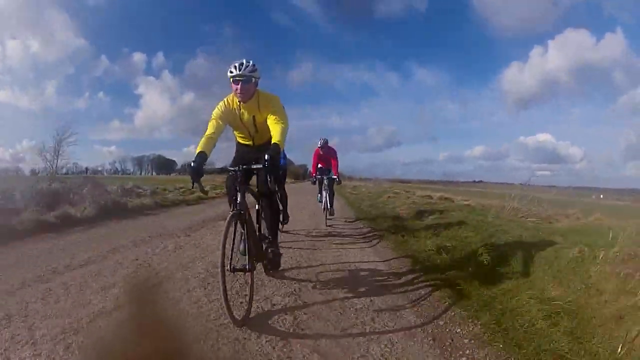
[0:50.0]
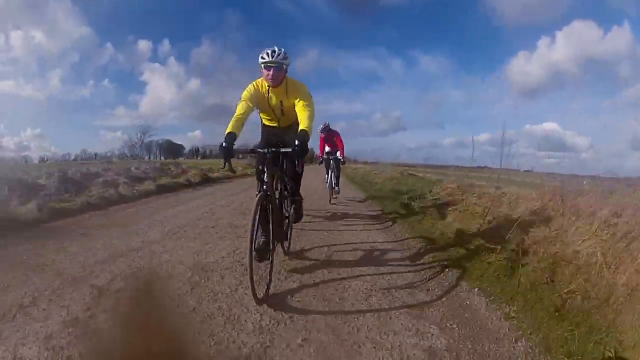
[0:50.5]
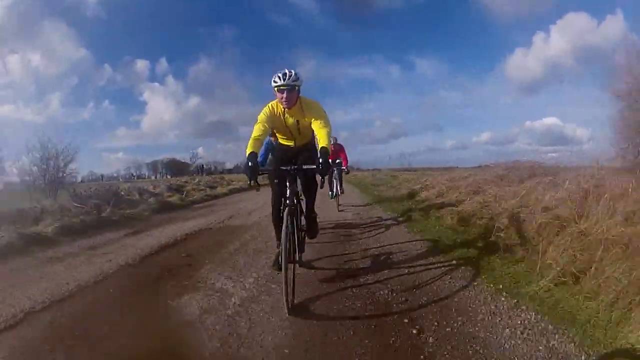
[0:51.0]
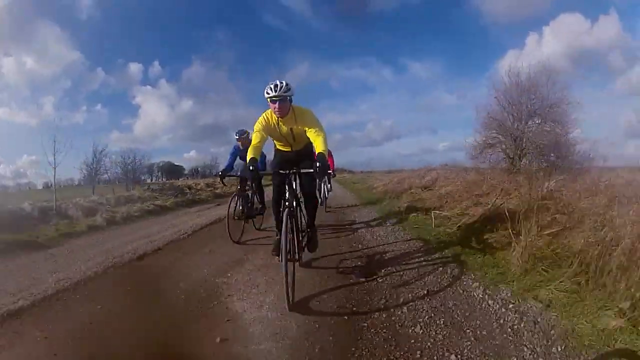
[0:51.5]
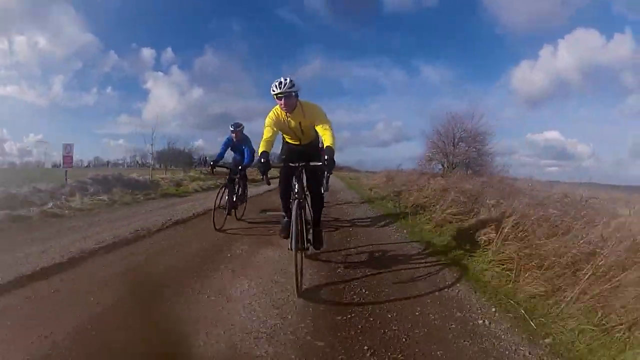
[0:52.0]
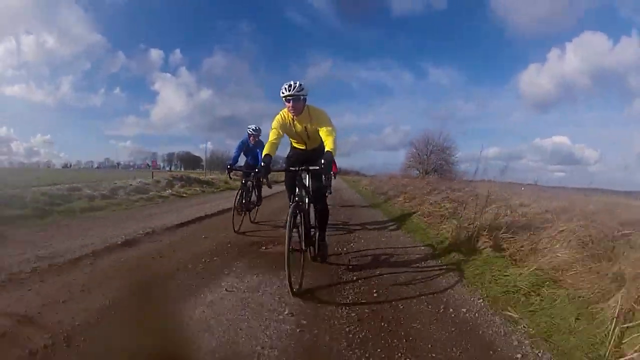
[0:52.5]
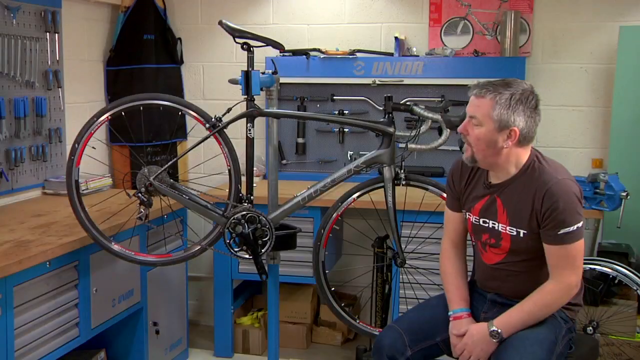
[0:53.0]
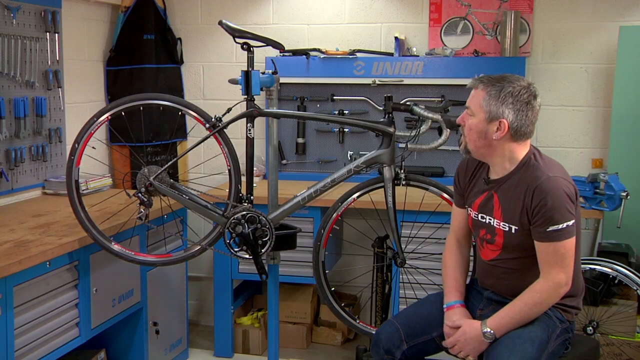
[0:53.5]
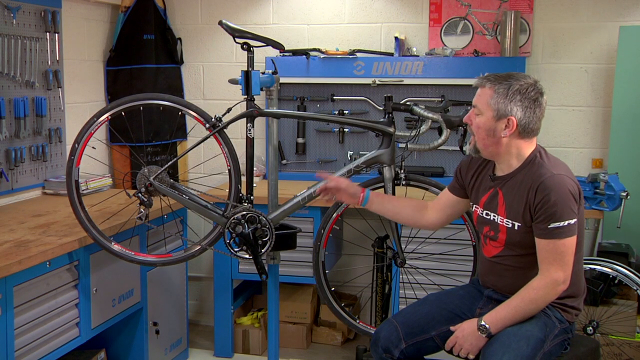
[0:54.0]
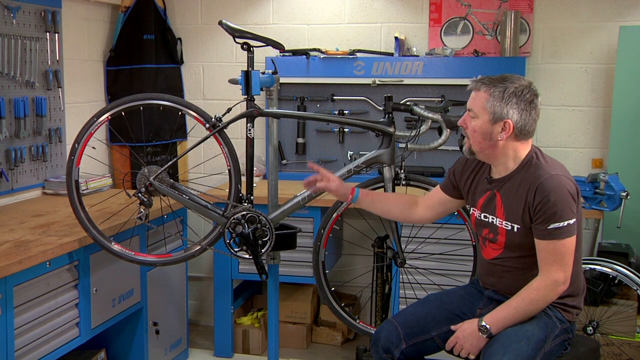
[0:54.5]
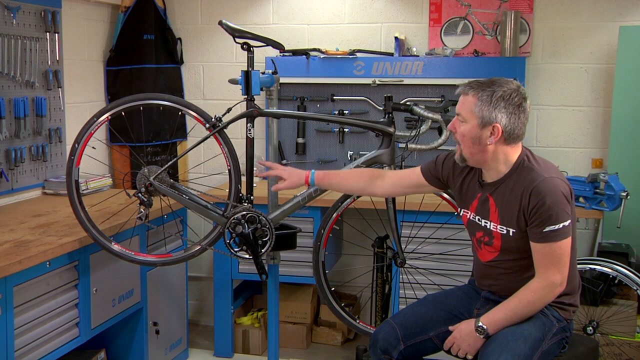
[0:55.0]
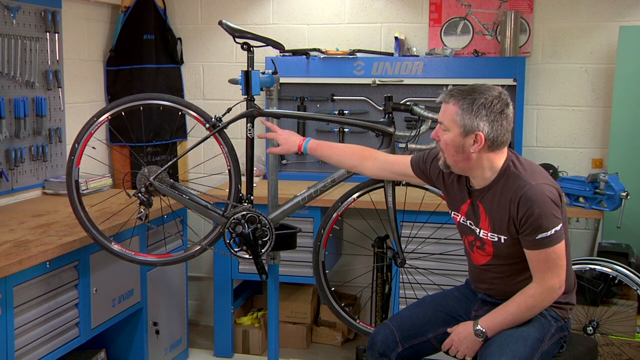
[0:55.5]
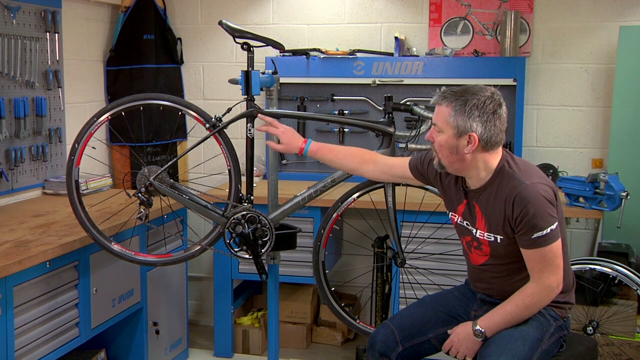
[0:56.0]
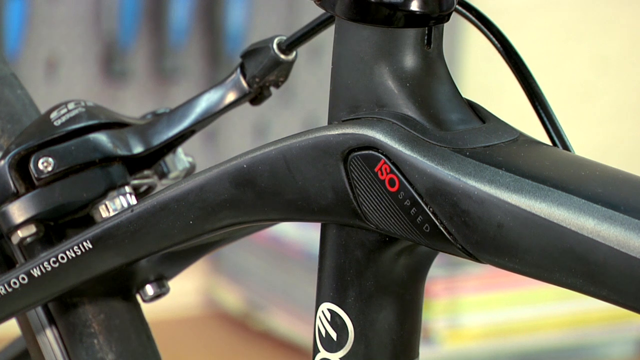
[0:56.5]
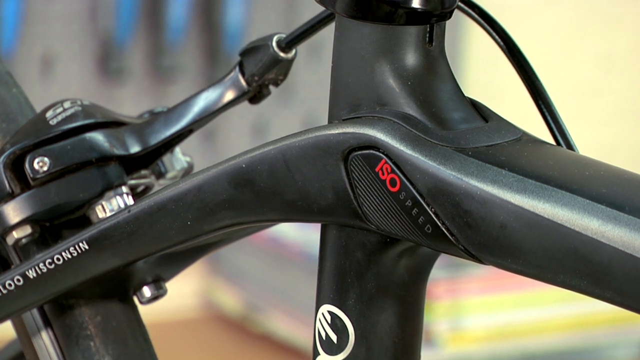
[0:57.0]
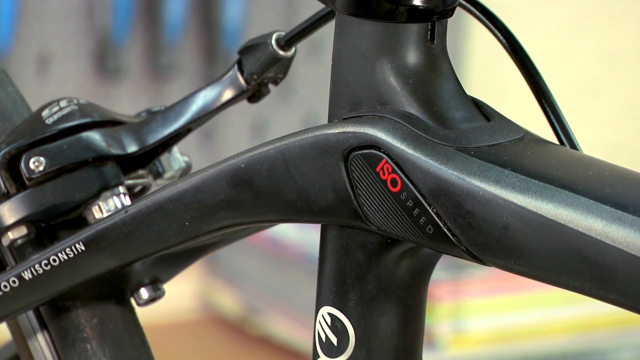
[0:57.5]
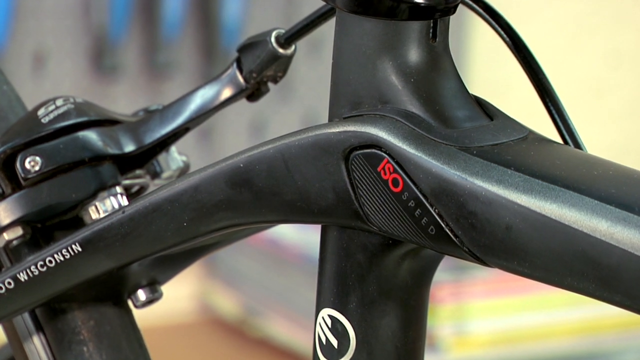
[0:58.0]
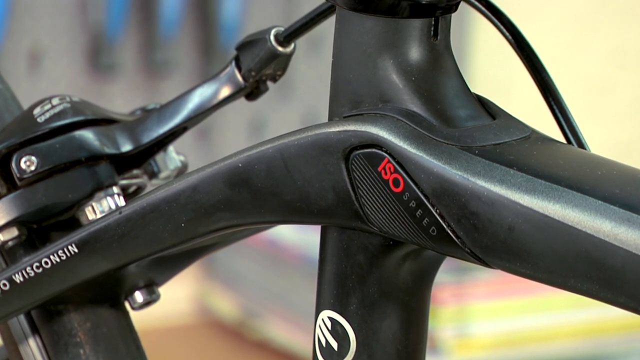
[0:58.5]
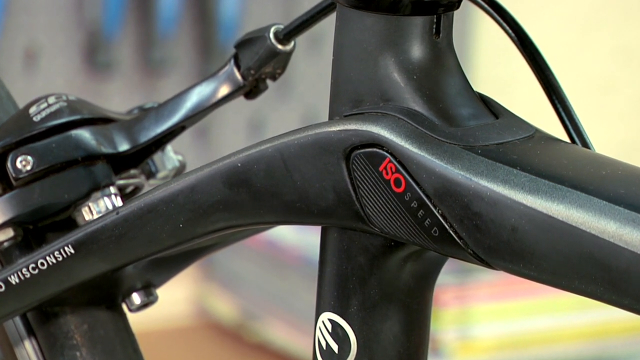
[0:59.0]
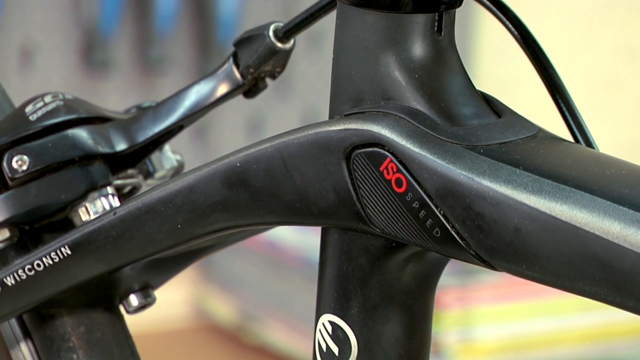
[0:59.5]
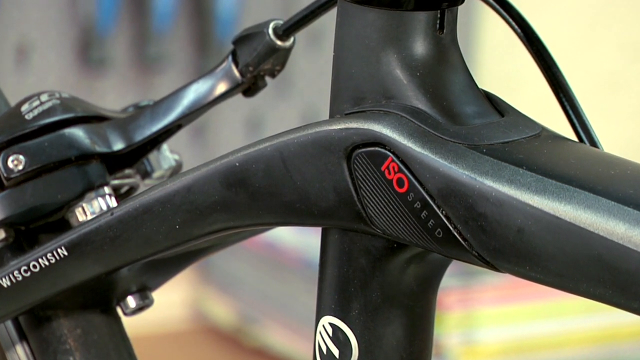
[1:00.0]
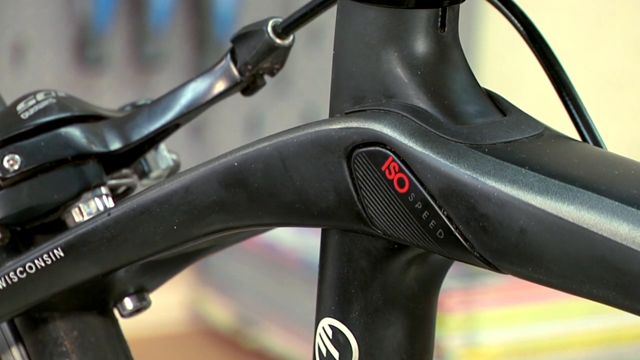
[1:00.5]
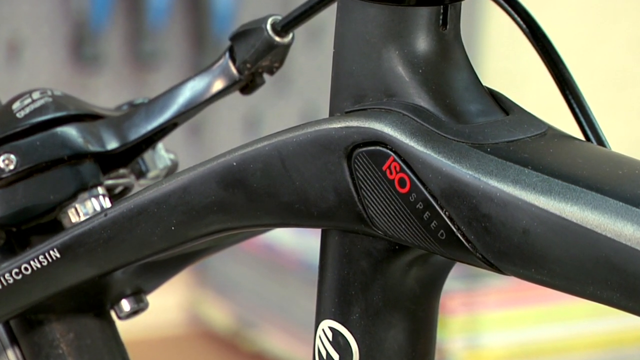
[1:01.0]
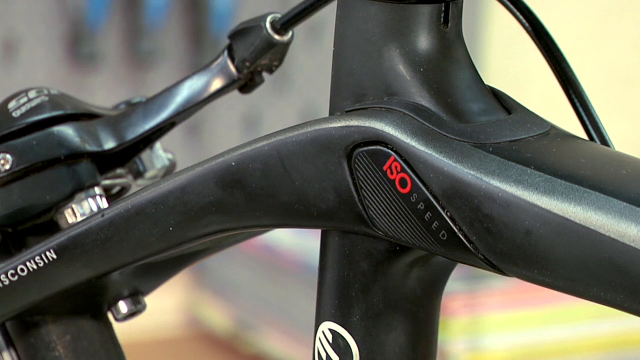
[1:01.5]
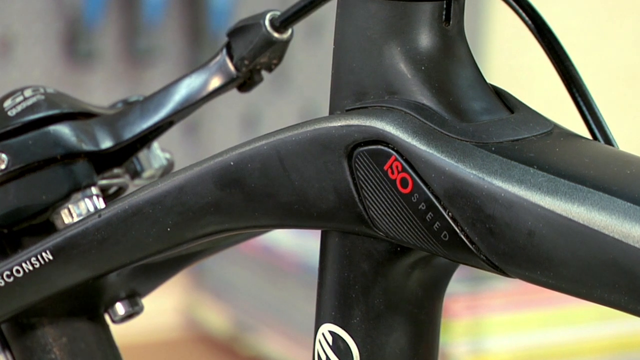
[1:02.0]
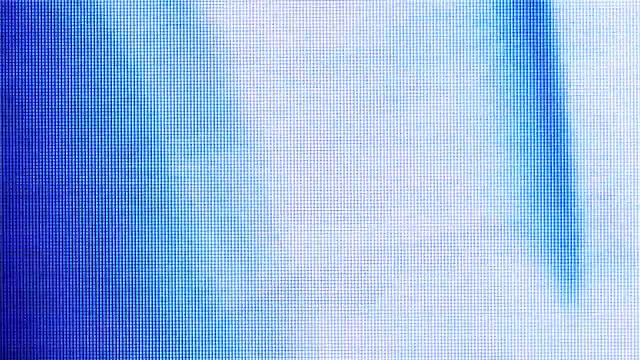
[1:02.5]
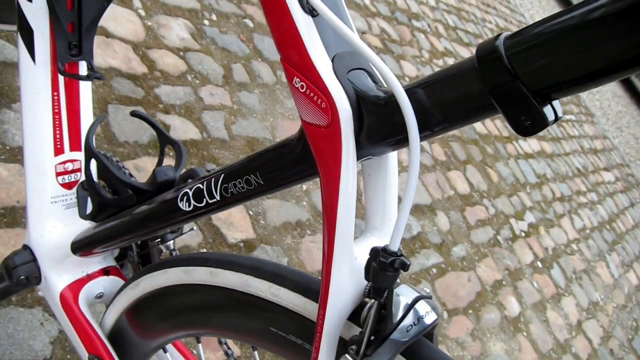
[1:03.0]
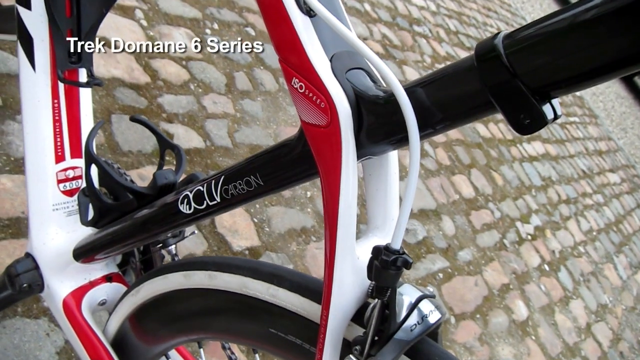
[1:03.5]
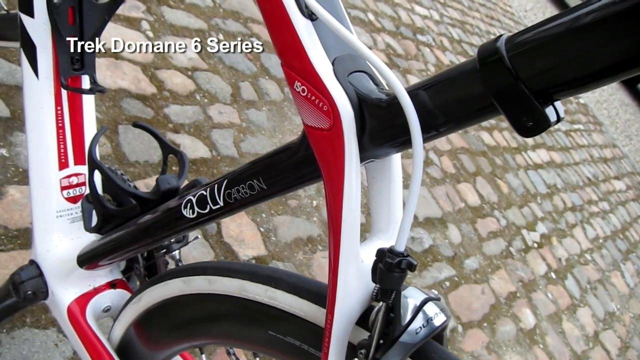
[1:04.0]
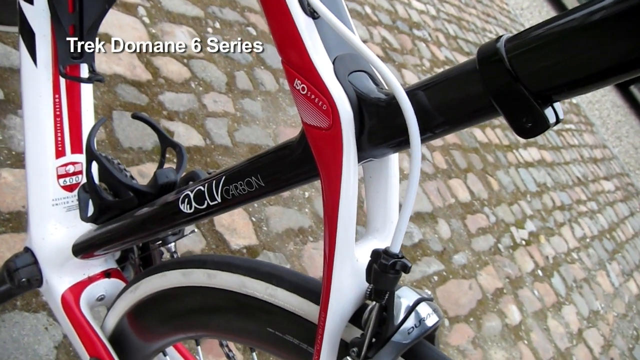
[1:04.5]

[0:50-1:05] Three or four riders are on their dirt track, and then the video returns to the gentleman sitting and talking about the bike. The camera appears to zoom in on the area under the seat, where the seat pin connects into the bike. A label there says "ISO Speed", and apparently something about Wisconsin is imprinted on part of the frame underneath the brake area, with the text before it unreadable. The video then shows a clearly different bike with a lot of white on the frame, very zoomed in on the frame, possibly as a point of comparison; this seems to be an OCLV bike and appears only briefly. There is also a little footage of people riding.